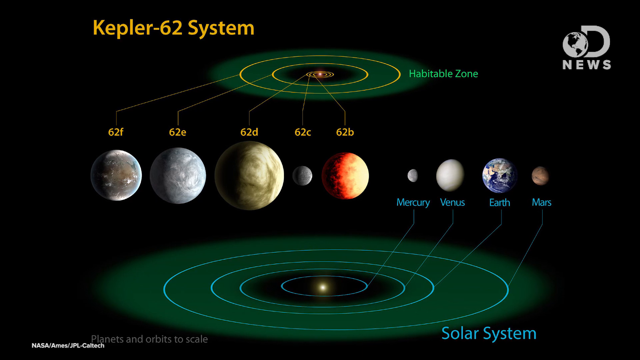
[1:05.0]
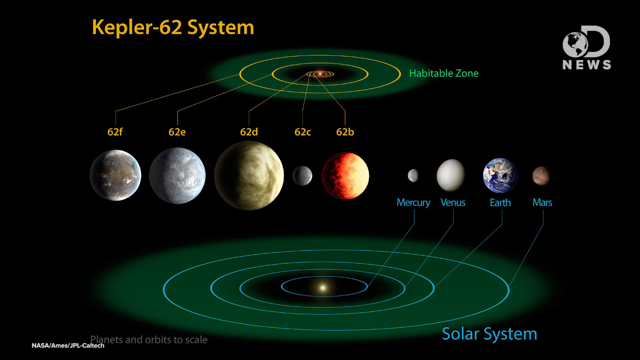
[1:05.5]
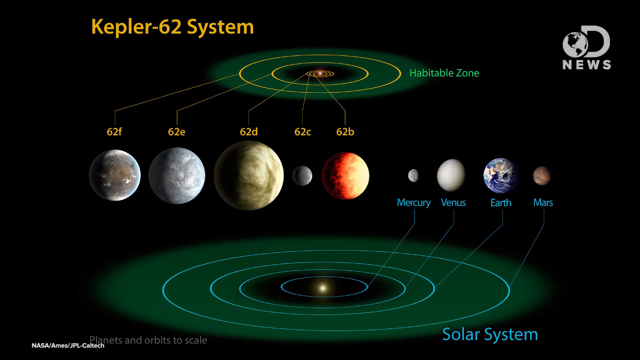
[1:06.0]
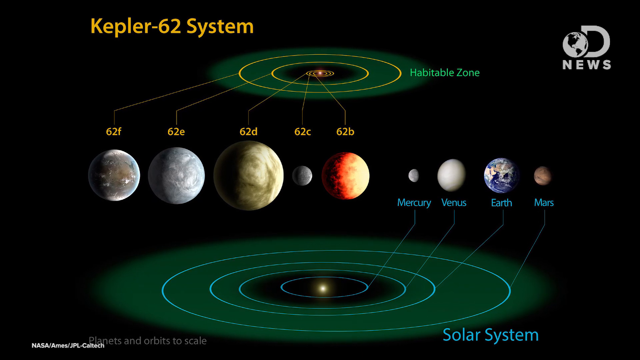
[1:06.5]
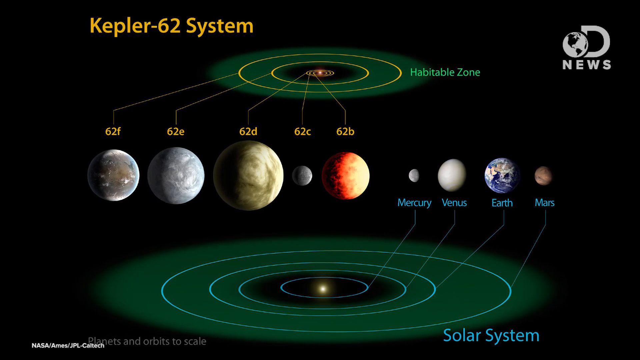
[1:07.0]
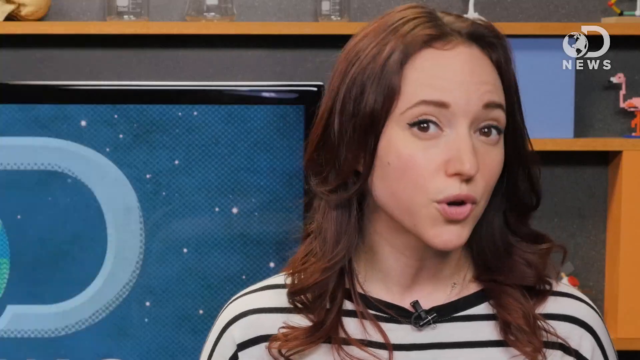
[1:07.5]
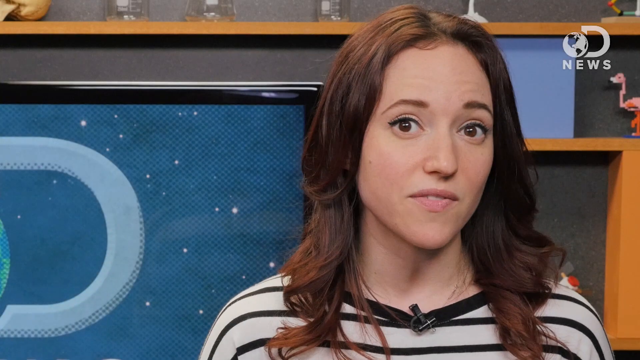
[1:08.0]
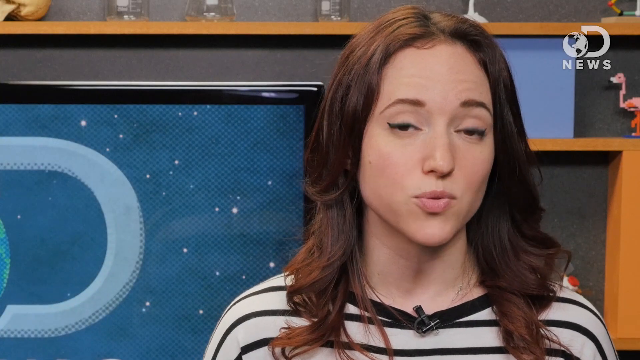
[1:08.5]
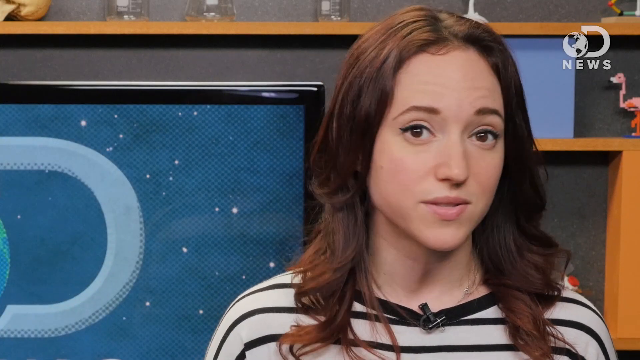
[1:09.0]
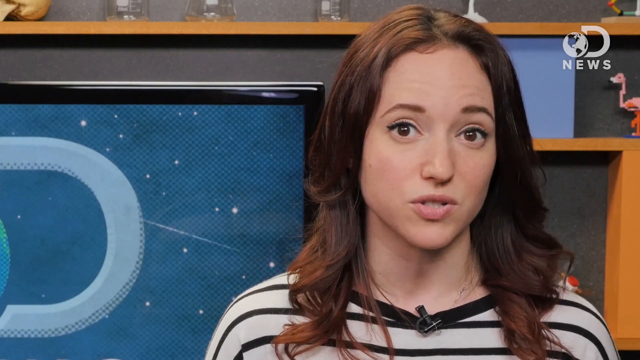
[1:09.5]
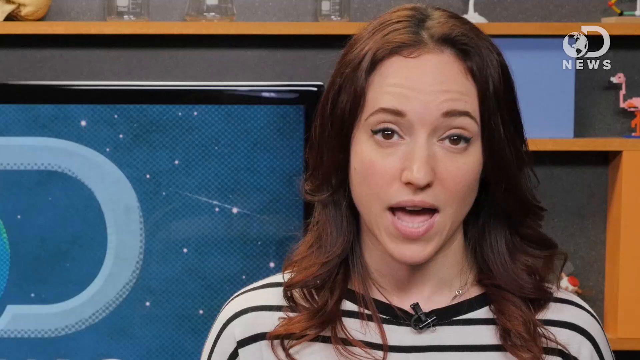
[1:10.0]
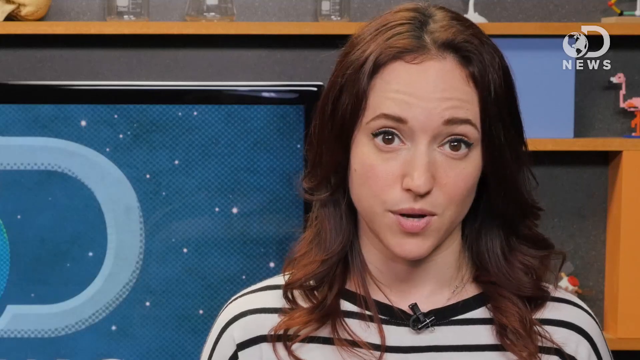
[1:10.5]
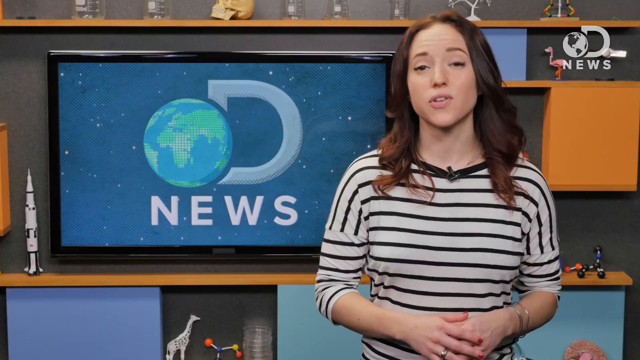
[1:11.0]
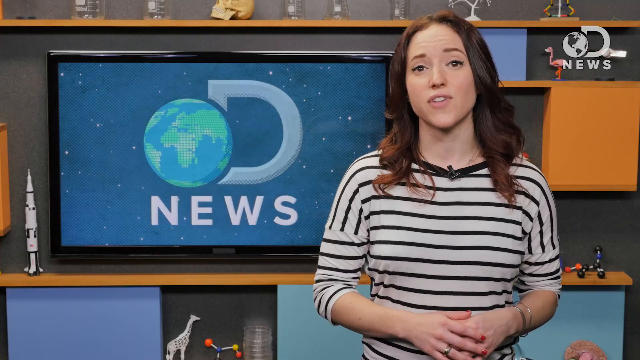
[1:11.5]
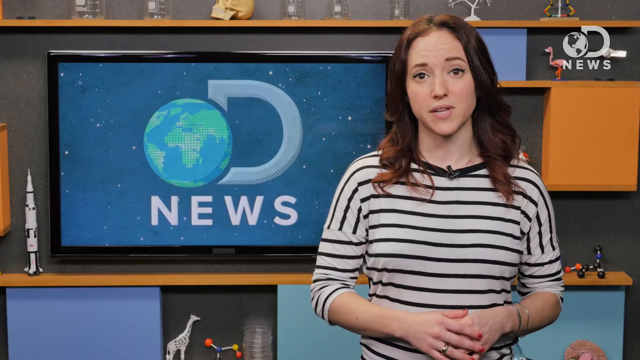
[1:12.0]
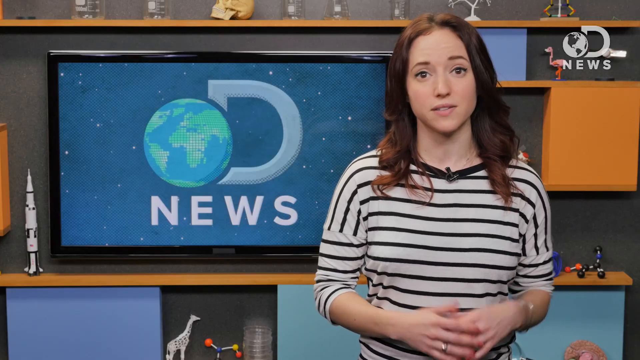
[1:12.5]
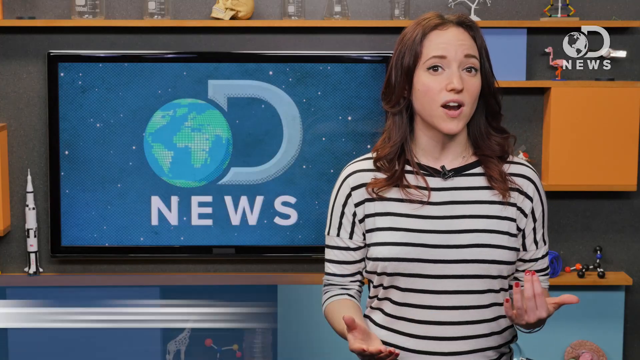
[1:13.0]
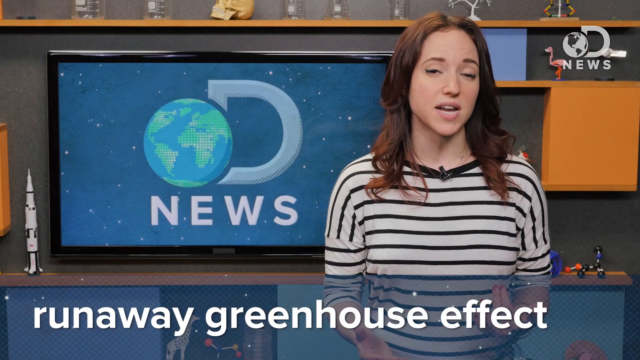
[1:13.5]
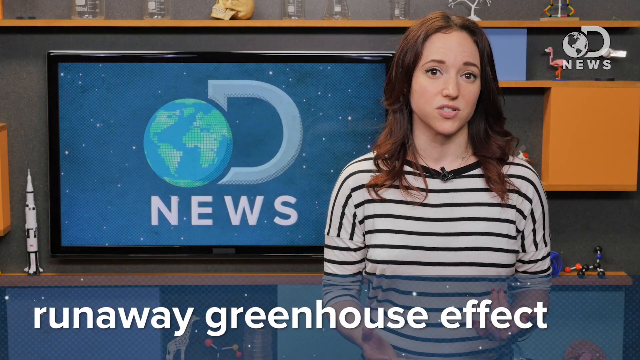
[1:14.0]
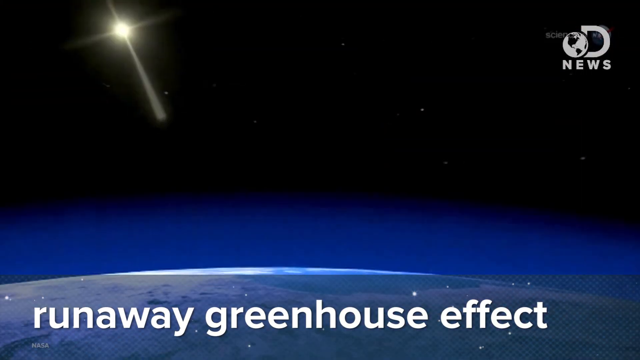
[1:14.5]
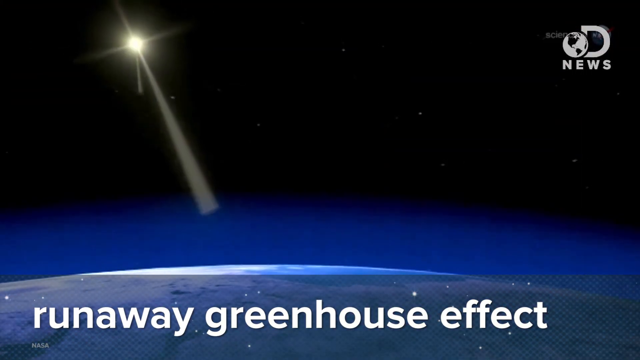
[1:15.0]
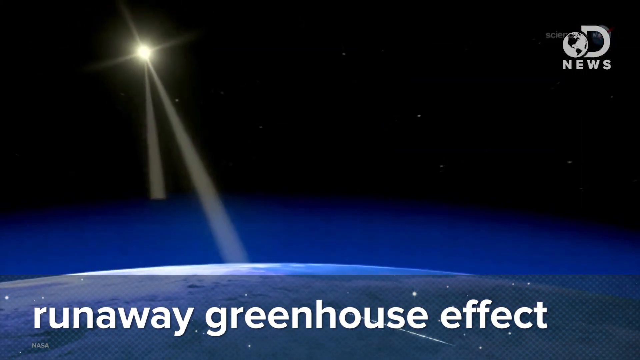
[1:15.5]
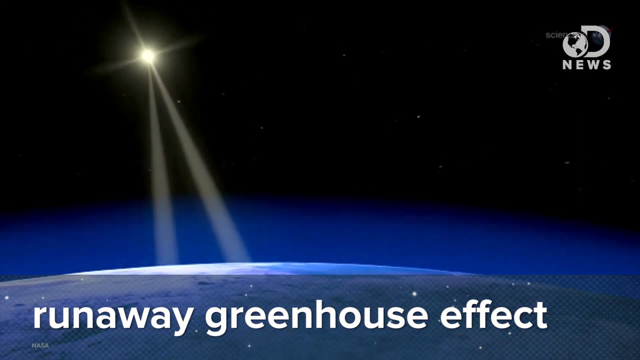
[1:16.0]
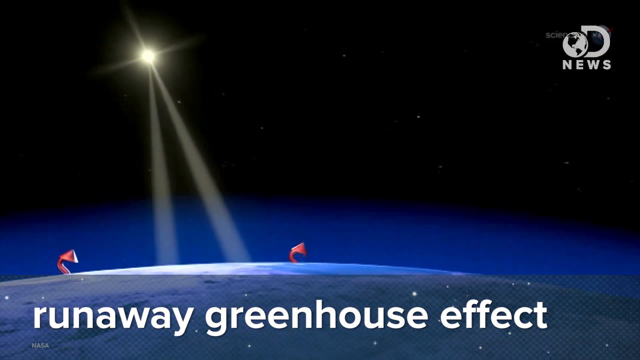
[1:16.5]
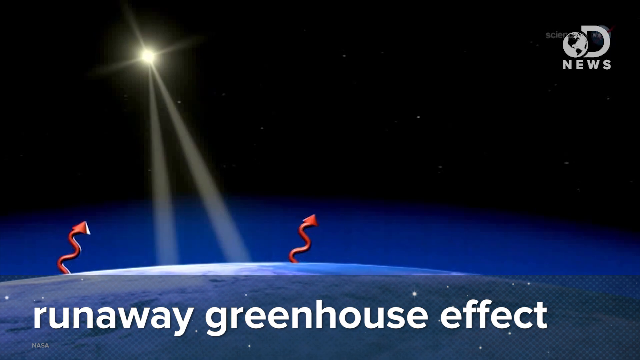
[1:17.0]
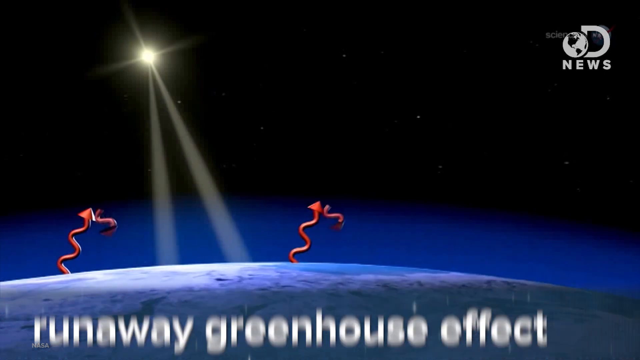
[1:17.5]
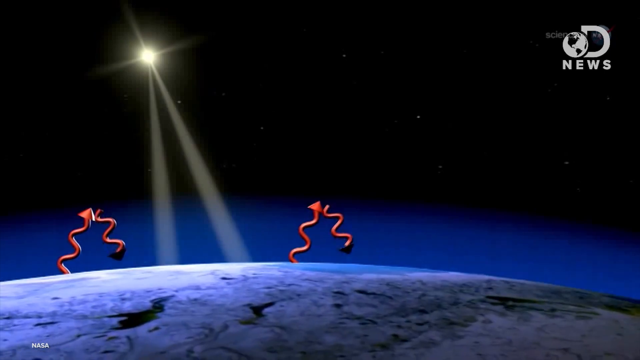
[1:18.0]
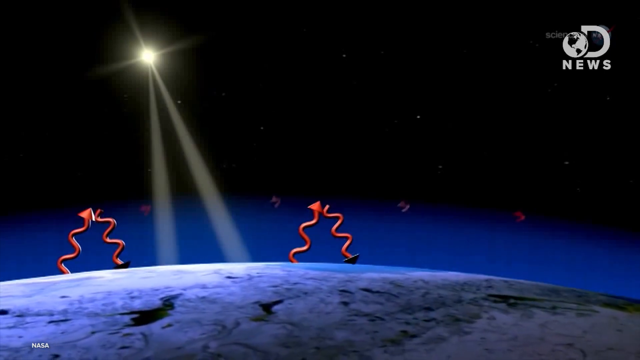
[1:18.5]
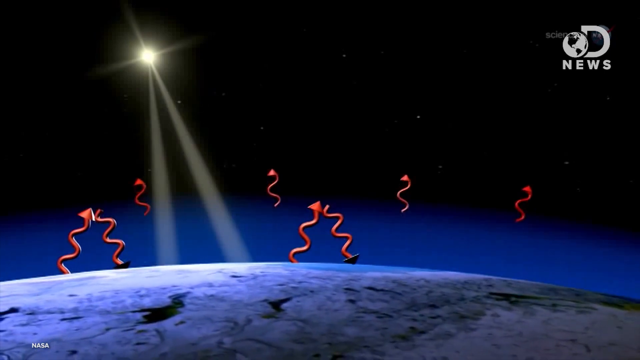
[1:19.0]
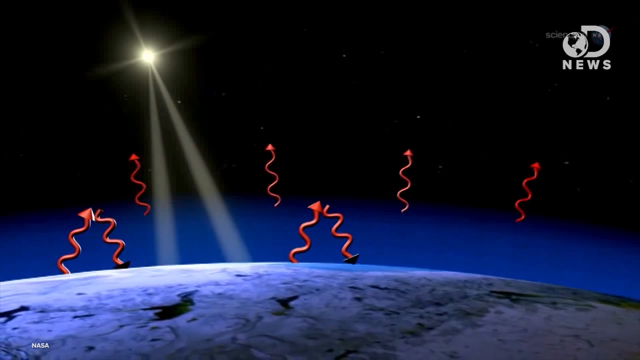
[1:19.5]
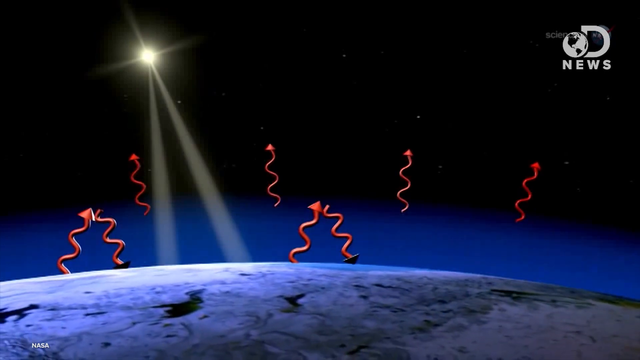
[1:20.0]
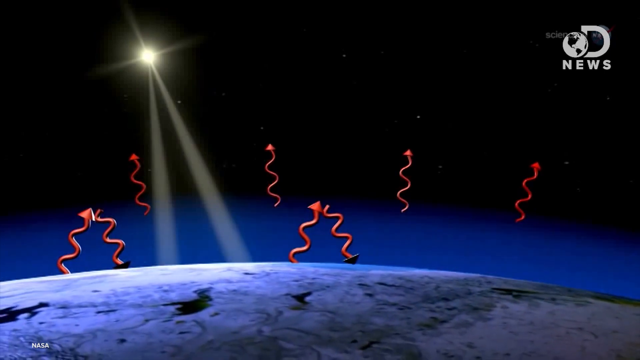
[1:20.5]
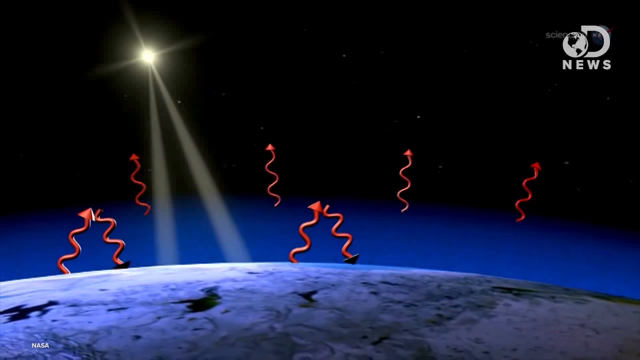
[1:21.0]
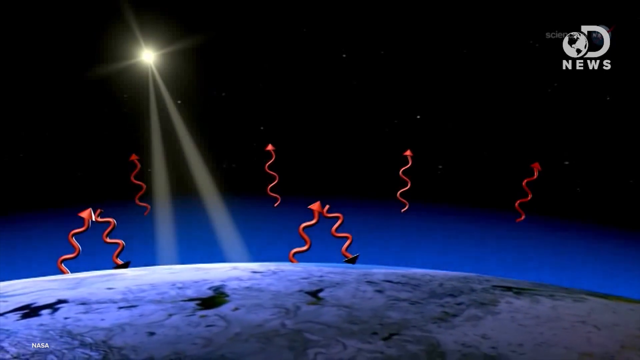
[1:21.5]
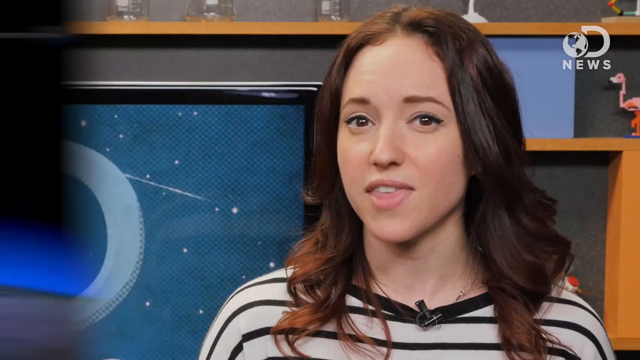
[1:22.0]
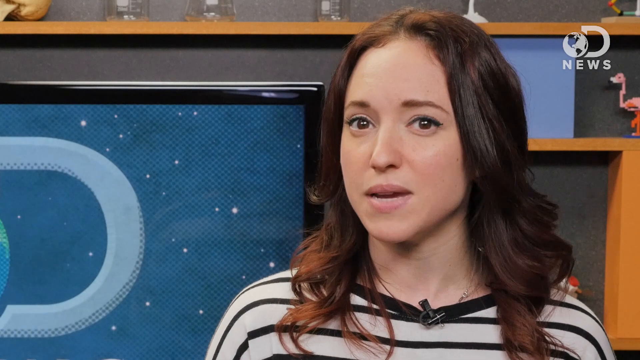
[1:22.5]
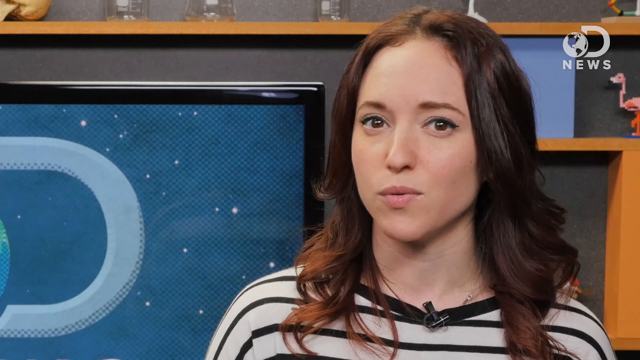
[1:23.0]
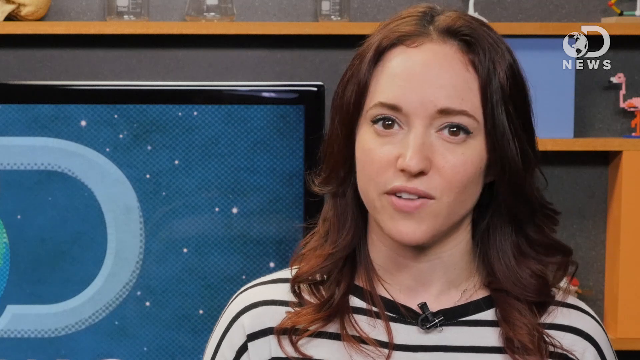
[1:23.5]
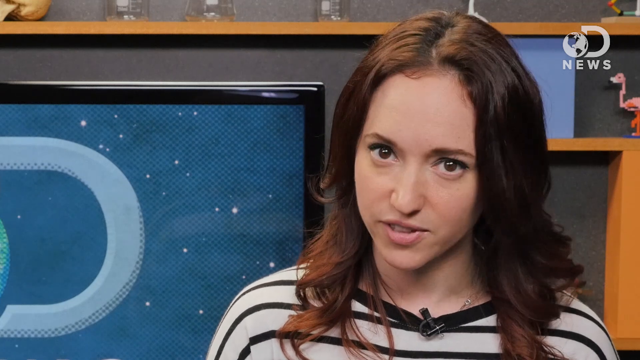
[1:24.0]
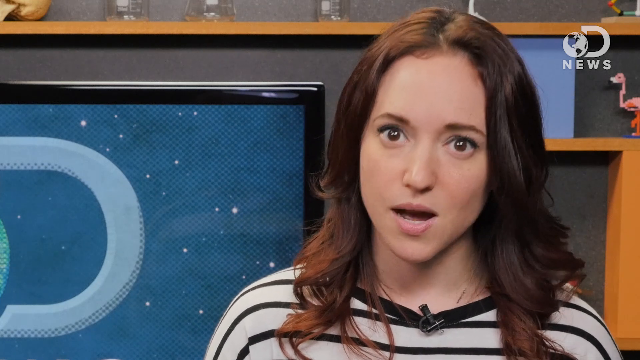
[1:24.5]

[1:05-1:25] The Kepler diagram comparing that system to our solar system shows briefly, then the view switches to the presenter in the news studio, in front of the same set with the TV screen showing the DNews logo and the bookcases. As she speaks, the words "runaway greenhouse effect" appear in white text at the bottom of the screen. The view then switches to an animated illustration of the runaway greenhouse effect: a sun shines on the surface of a planet, and red squiggly lines with arrows come up from the planet, indicating something being released from it. The view then switches back to a close-up of the presenter speaking. Her position and the studio do not change whenever she speaks, but the shots of her are intercut with diagrams and illustrations. Throughout the entire video, the DNews logo appears in the upper right corner and the word "subscribe" in the lower right corner.